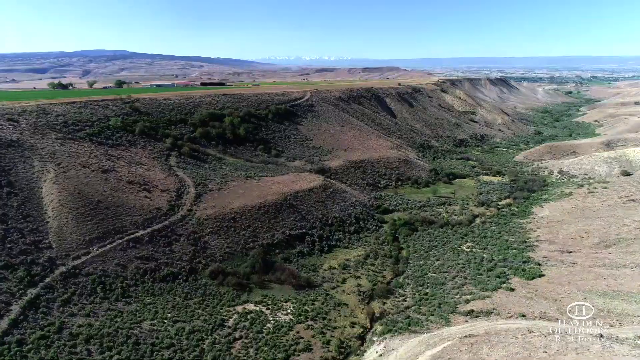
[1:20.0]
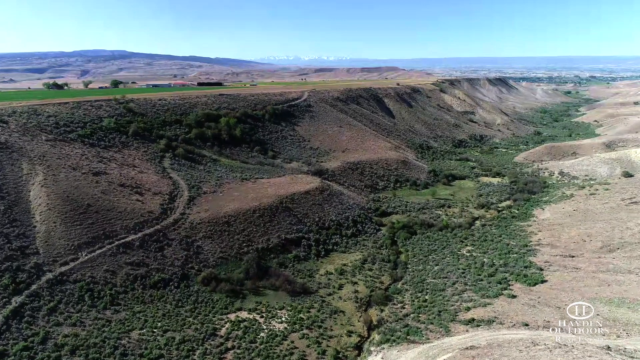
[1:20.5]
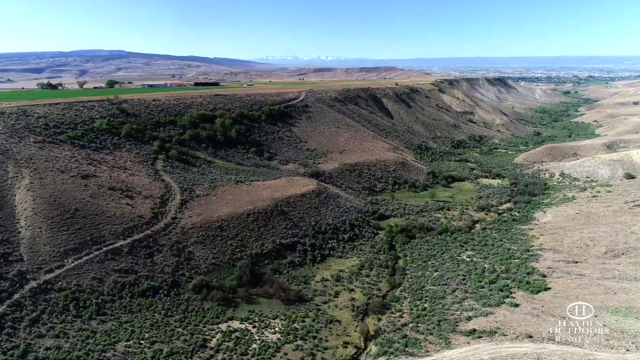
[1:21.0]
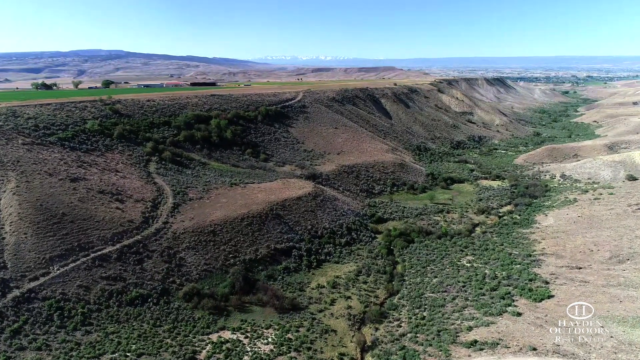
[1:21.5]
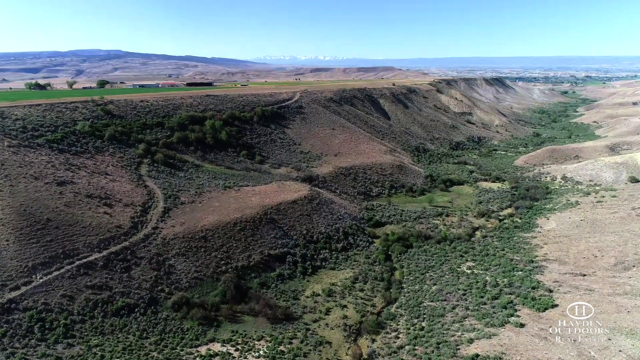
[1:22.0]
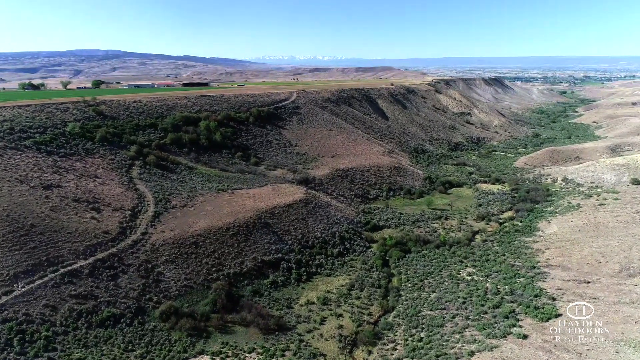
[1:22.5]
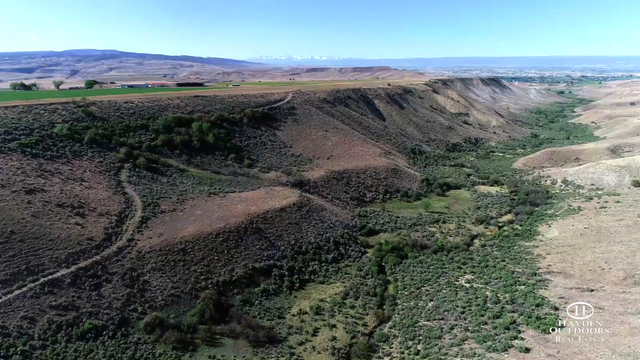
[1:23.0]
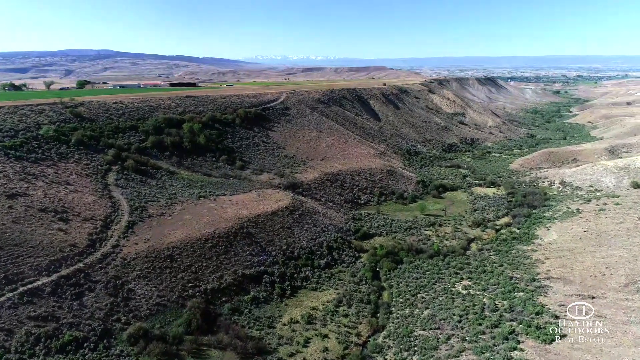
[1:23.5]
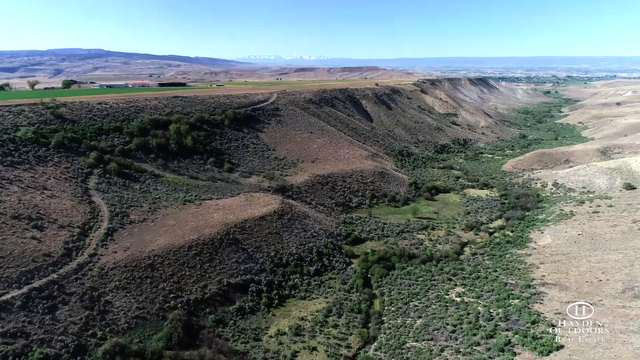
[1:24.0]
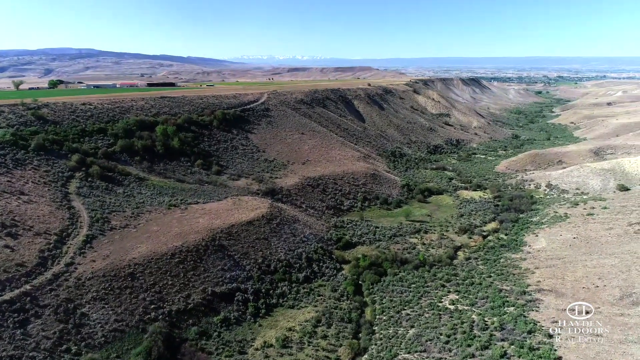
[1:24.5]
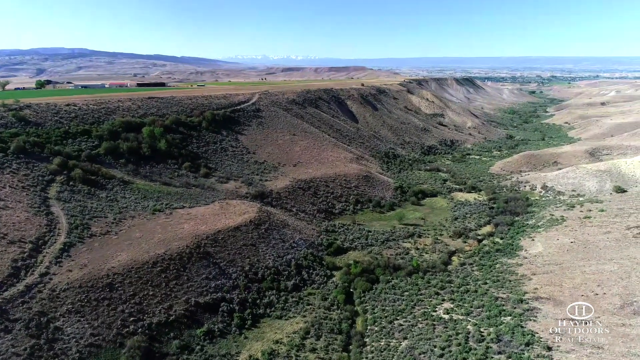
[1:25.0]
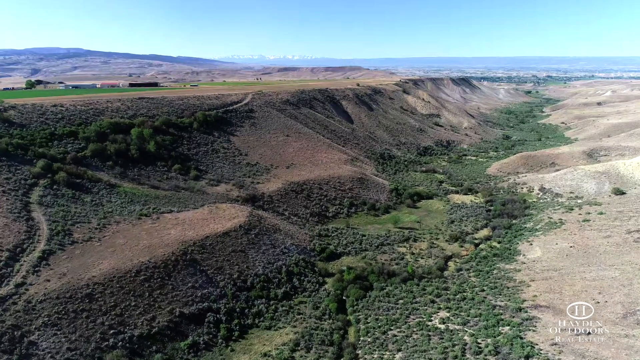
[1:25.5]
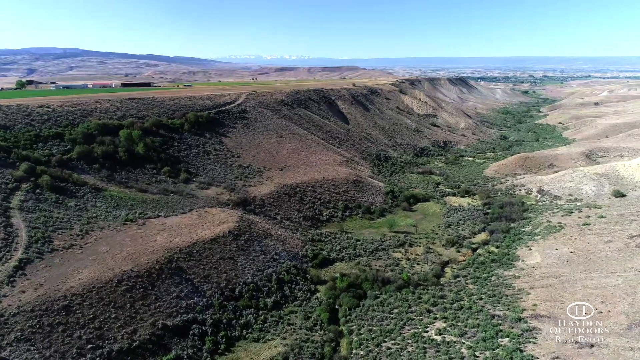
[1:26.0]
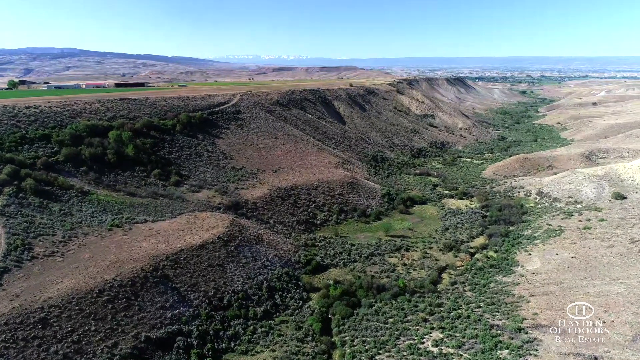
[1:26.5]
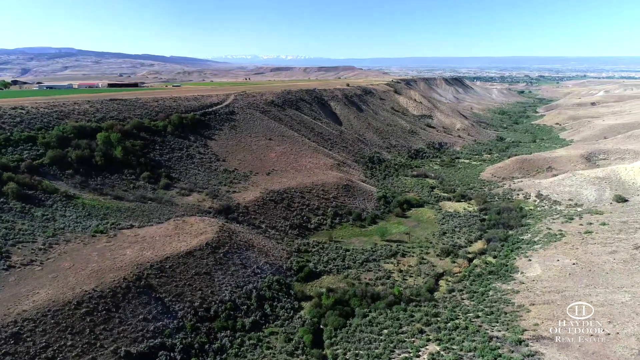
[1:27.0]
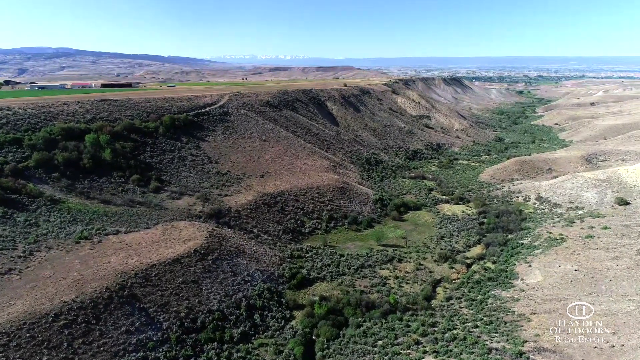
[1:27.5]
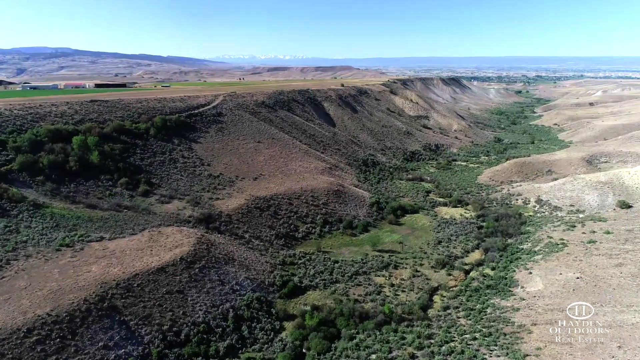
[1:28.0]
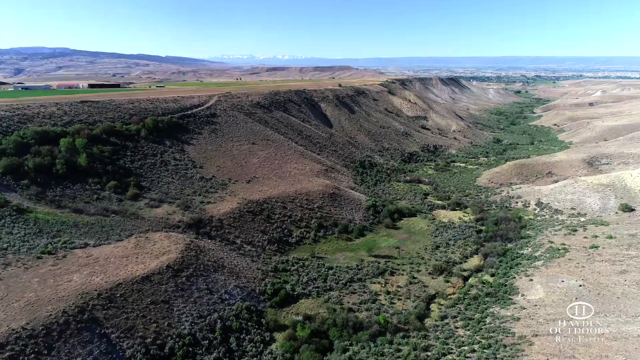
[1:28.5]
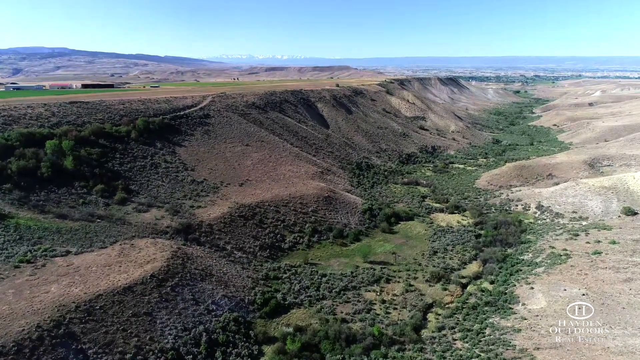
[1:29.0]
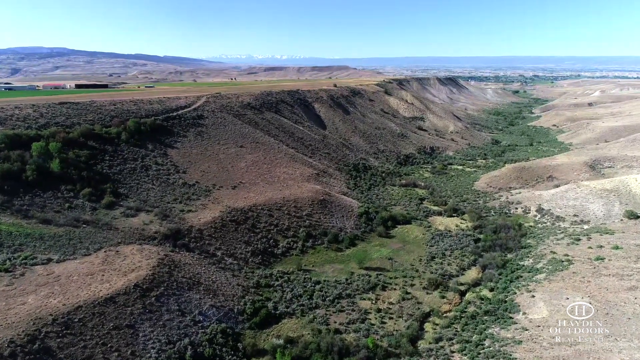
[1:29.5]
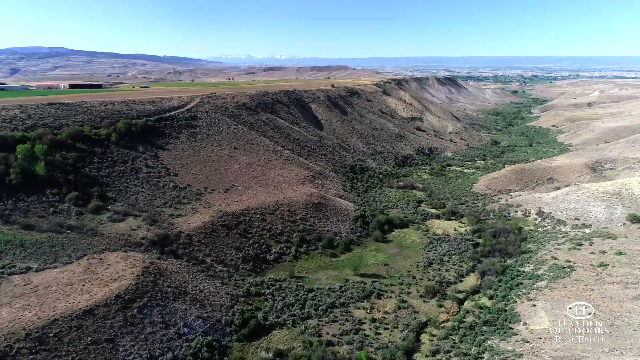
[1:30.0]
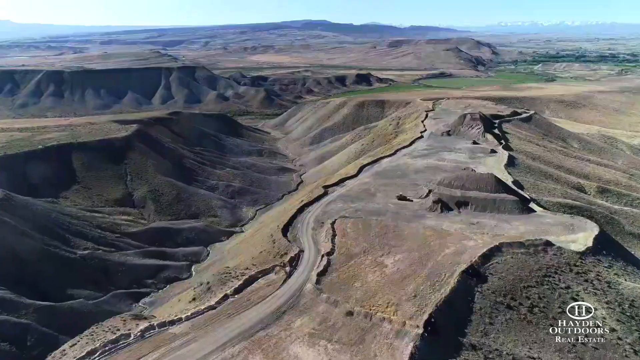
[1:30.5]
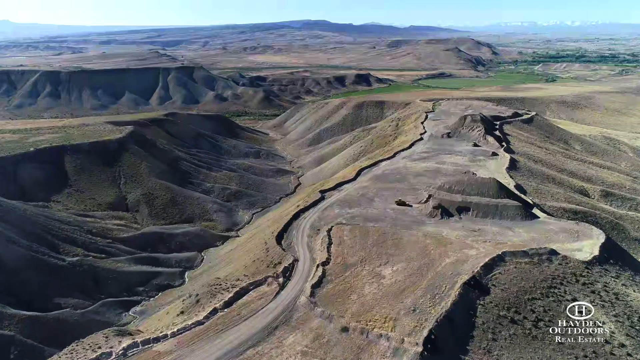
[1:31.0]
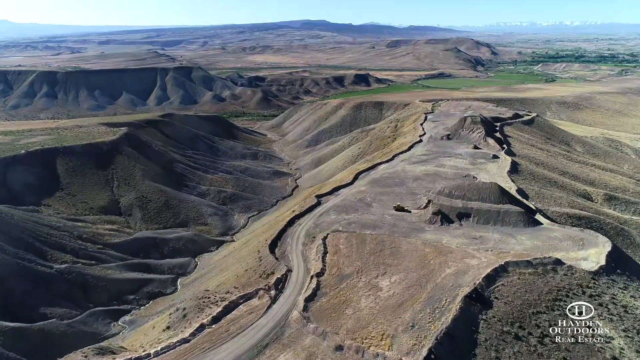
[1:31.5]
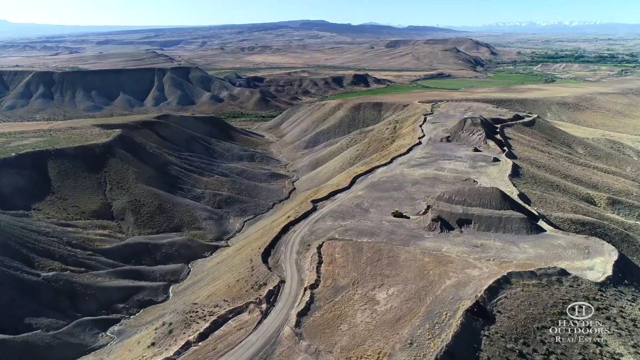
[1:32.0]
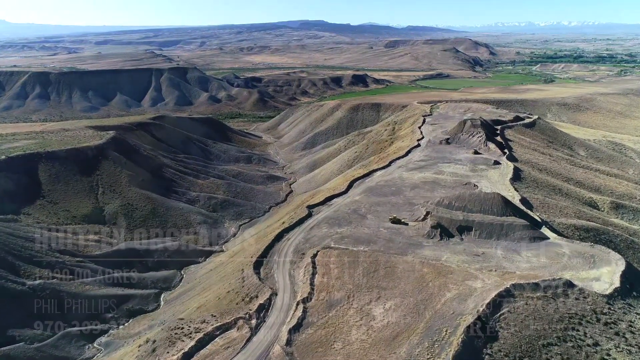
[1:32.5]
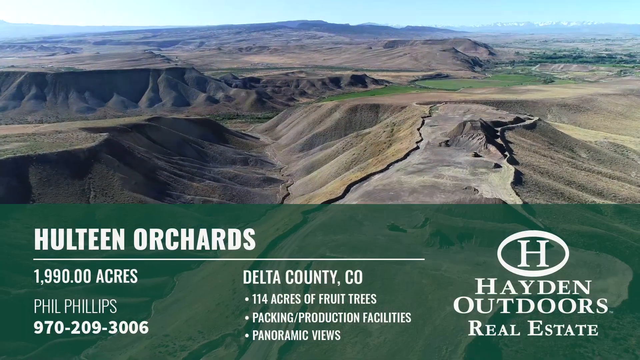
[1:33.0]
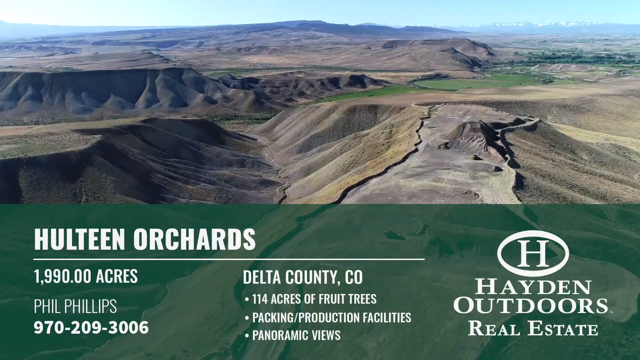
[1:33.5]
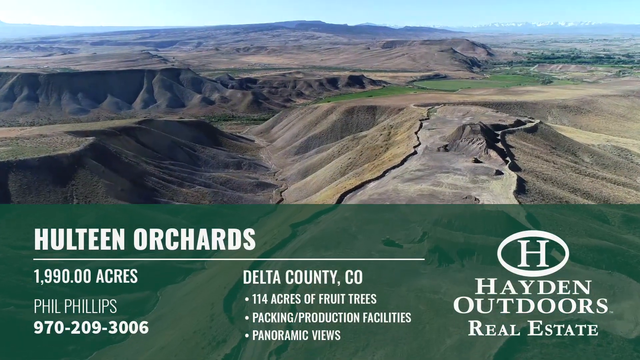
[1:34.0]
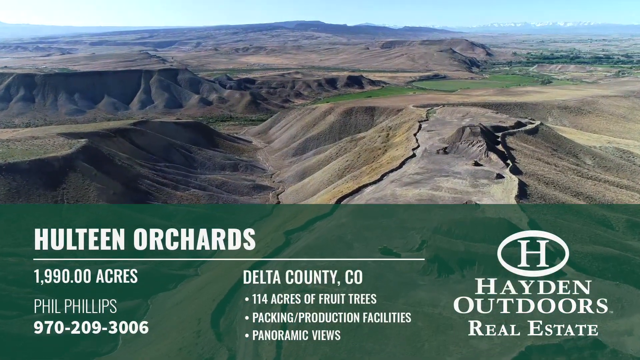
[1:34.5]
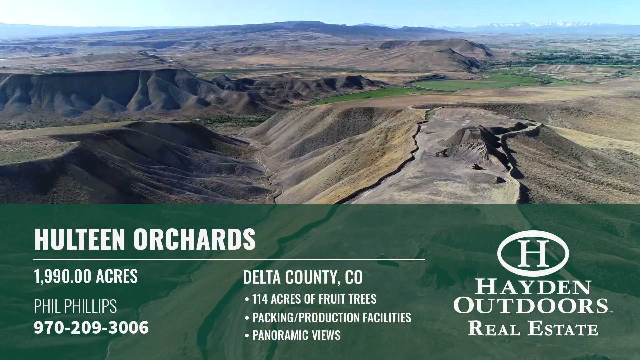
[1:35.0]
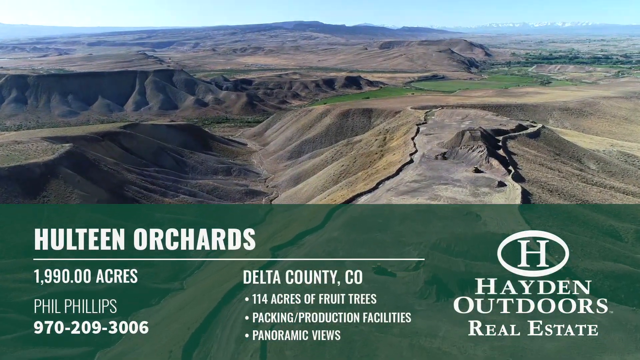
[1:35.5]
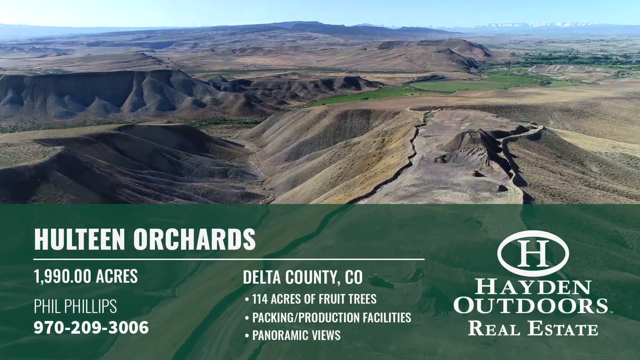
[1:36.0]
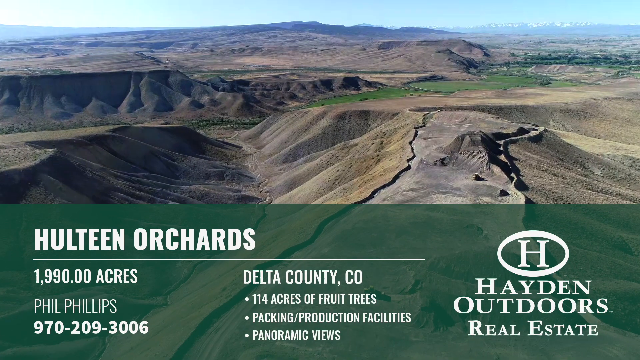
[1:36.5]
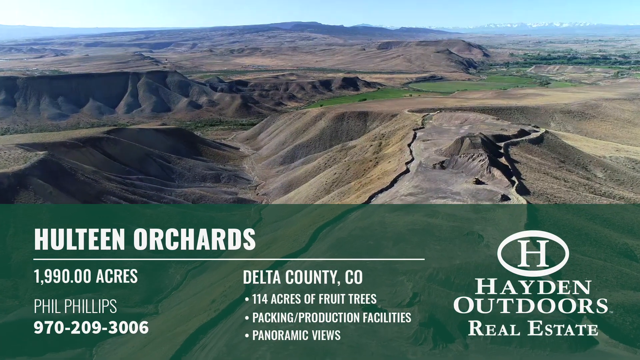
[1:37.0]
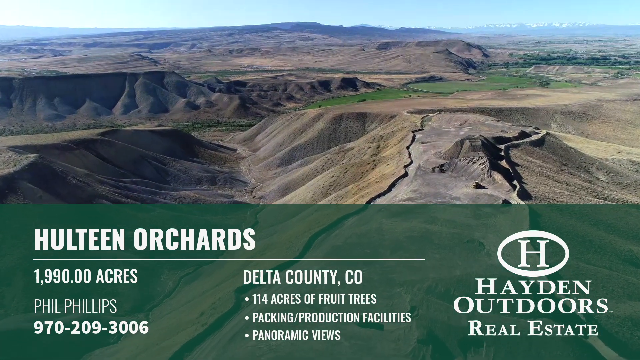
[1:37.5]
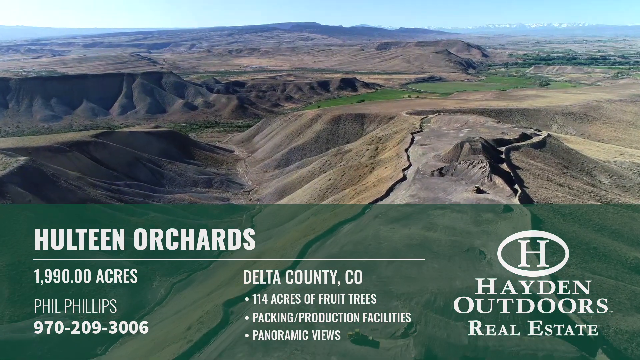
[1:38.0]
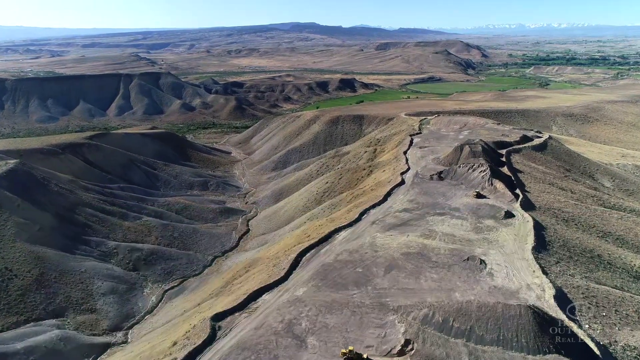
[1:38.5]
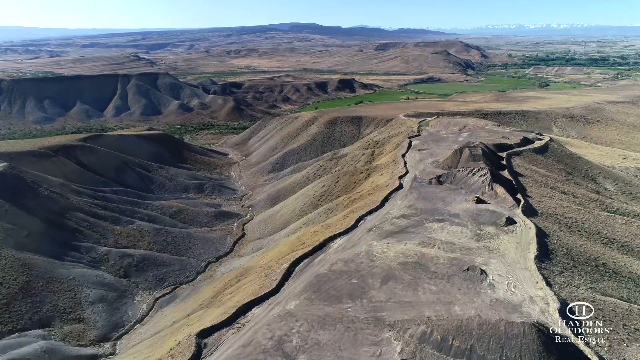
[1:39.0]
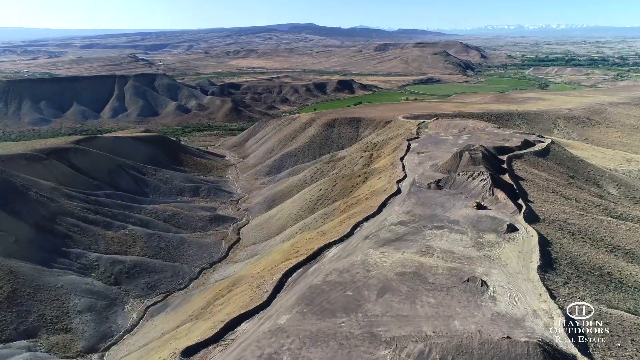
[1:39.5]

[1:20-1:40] The same image continues as the camera moves further down the hillside, with brown ground towards the bottom of the landscape, a little strip of green, and then the dirt mountain hillside. The video cuts to another view of low-lying hills or mountains, with white snow-capped mountains far in the distance. The information pops up on the screen again in white text on a translucent green background, saying "Hulteen Orchards" and giving the acreage and the area. It is the same information shown at the bottom of the screen earlier, listing amenities of the property including packing and production facilities and panoramic views.